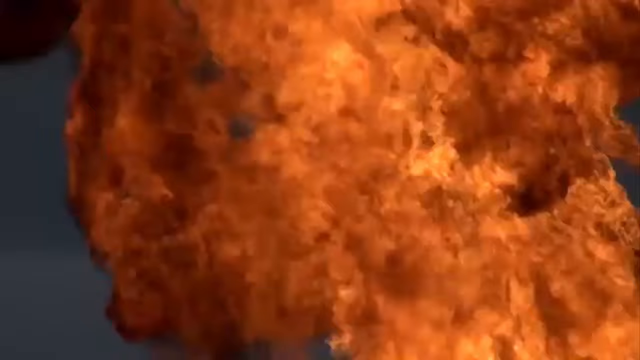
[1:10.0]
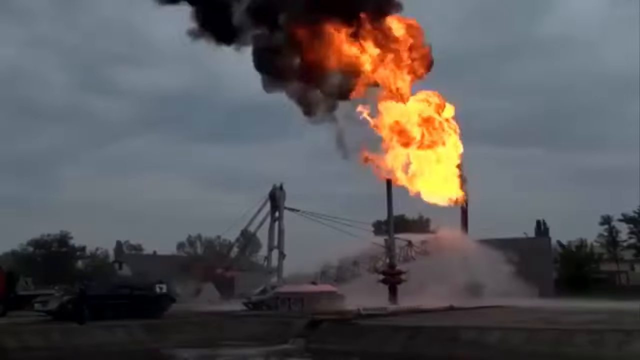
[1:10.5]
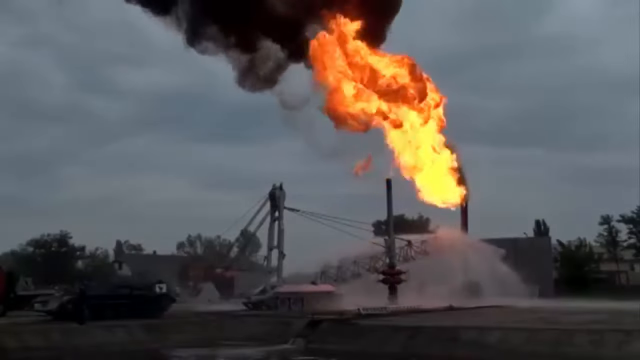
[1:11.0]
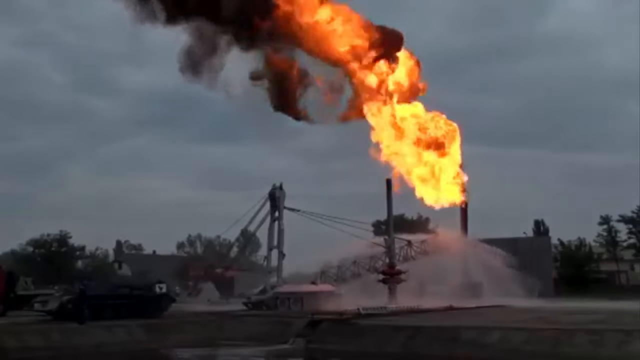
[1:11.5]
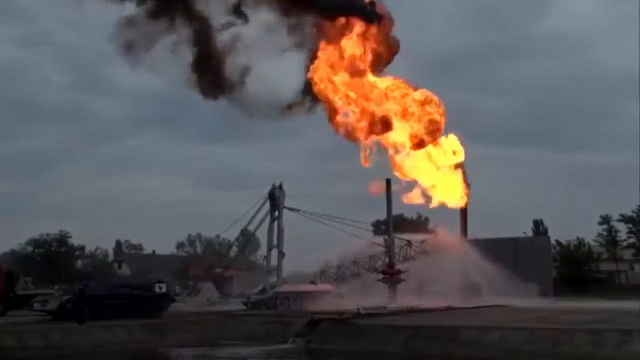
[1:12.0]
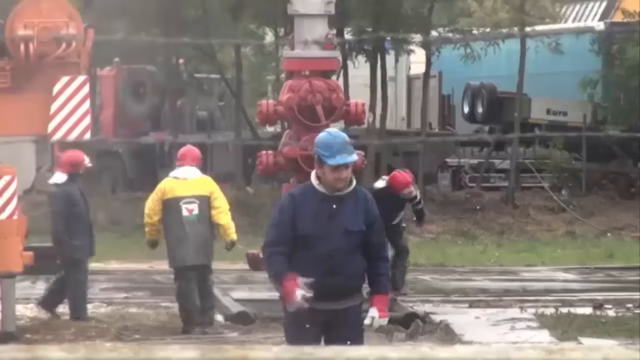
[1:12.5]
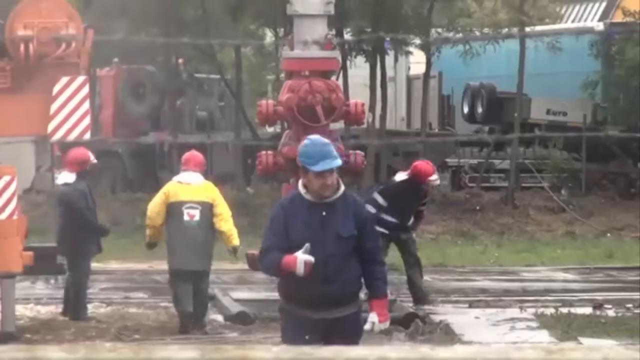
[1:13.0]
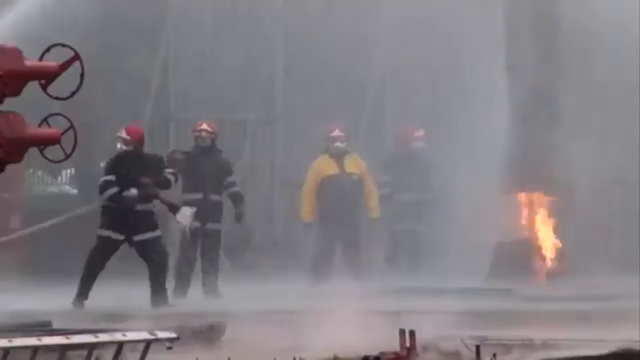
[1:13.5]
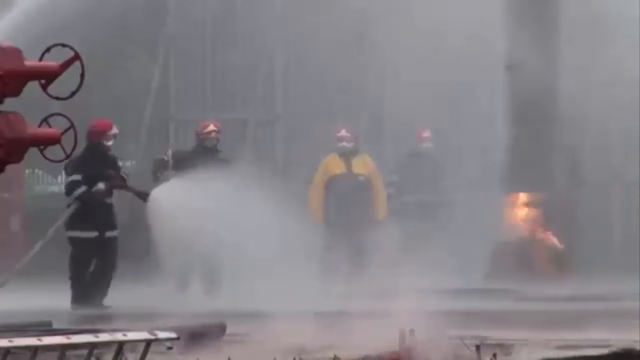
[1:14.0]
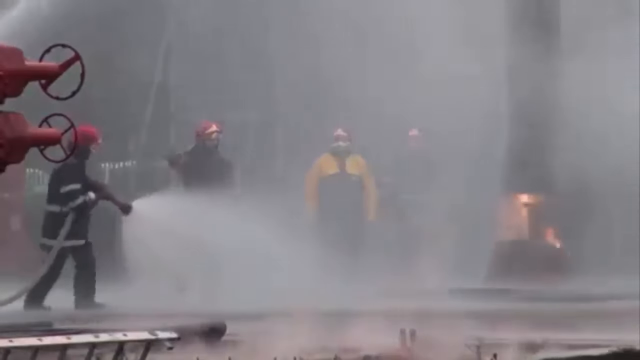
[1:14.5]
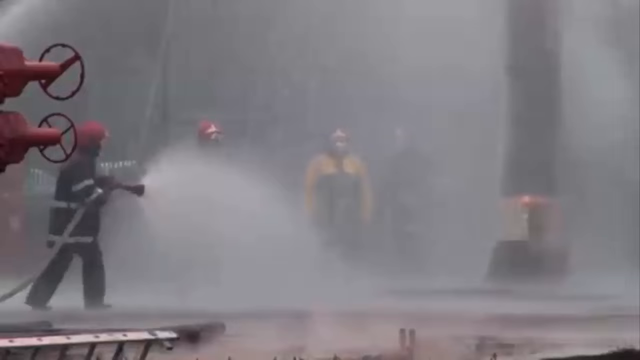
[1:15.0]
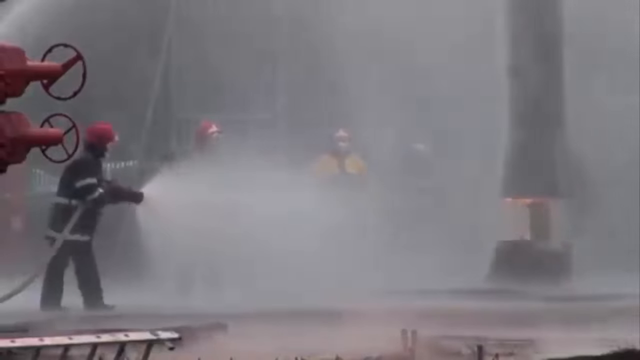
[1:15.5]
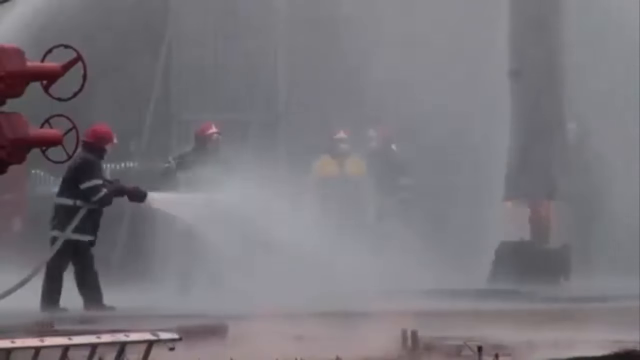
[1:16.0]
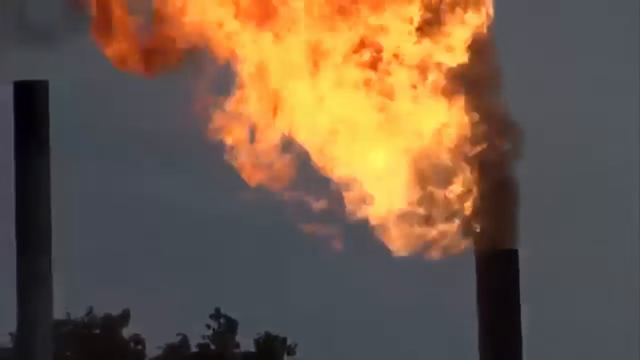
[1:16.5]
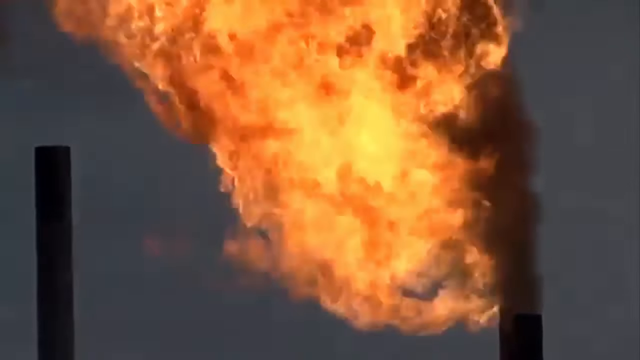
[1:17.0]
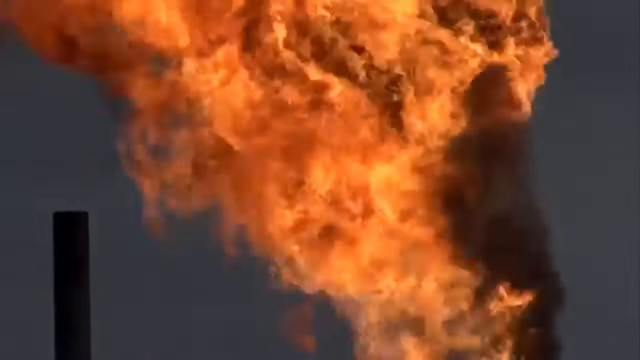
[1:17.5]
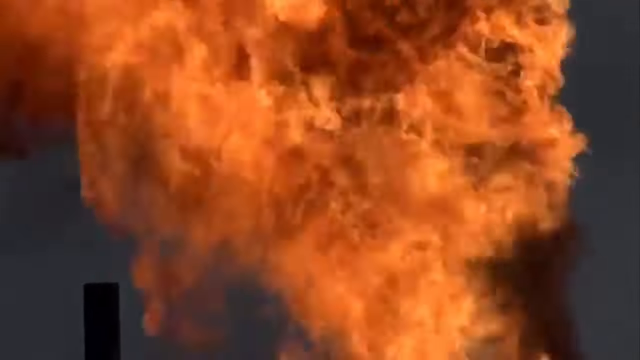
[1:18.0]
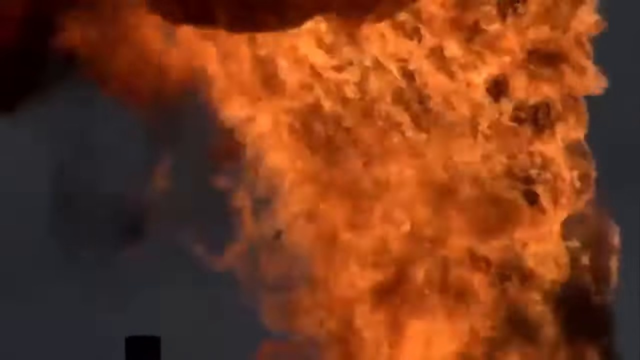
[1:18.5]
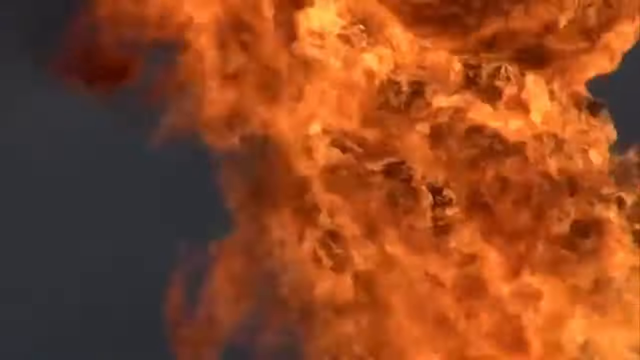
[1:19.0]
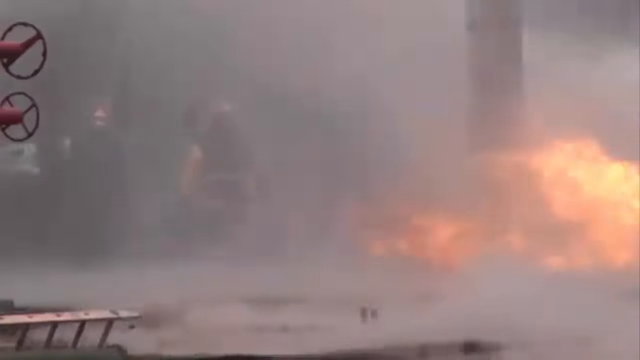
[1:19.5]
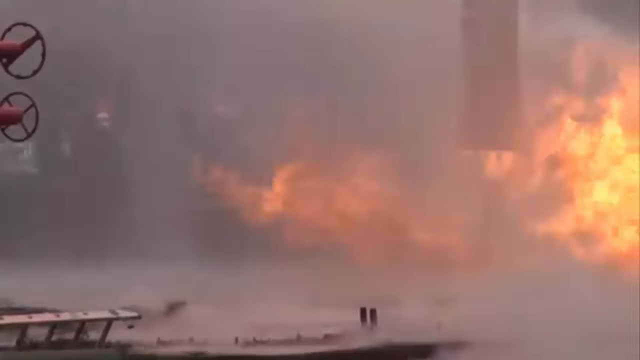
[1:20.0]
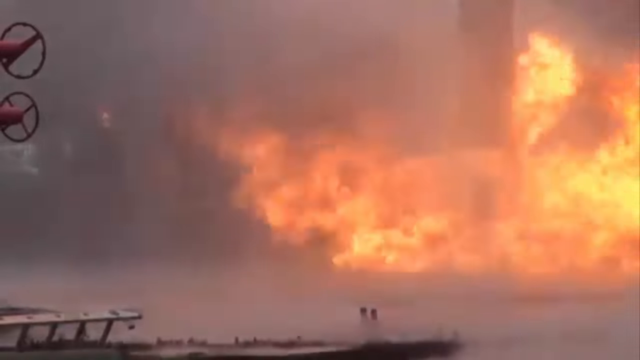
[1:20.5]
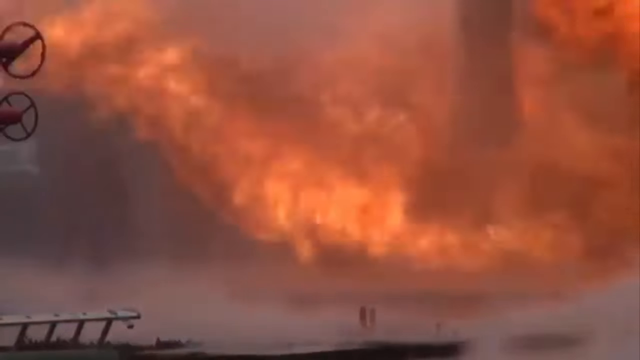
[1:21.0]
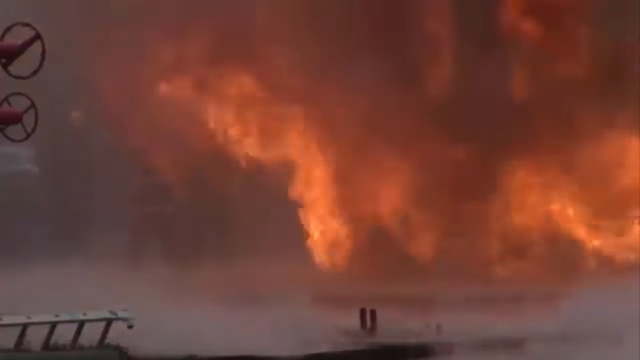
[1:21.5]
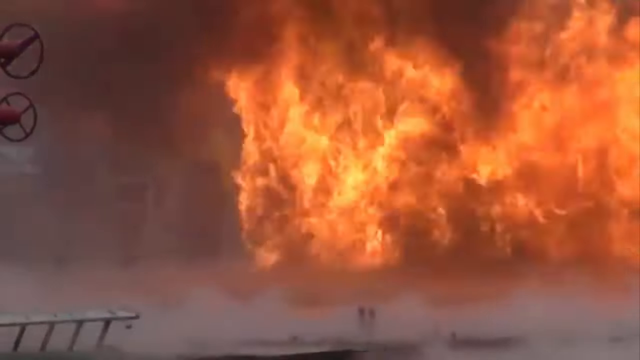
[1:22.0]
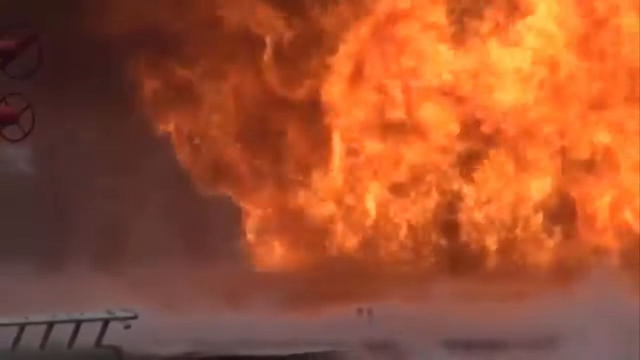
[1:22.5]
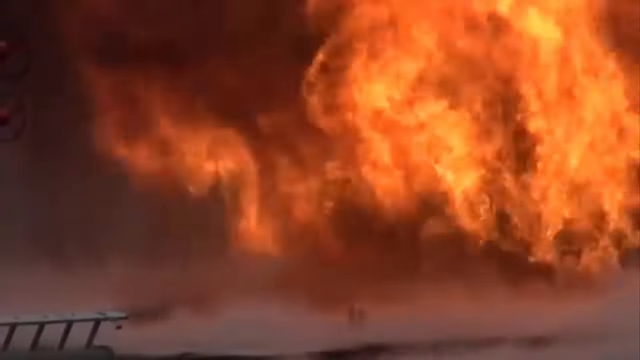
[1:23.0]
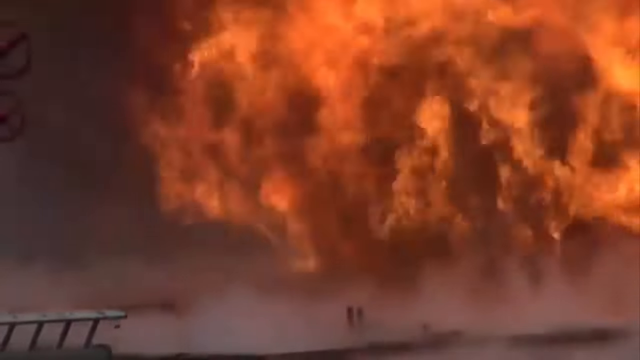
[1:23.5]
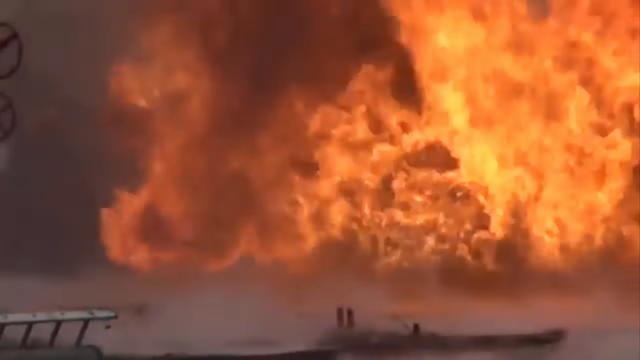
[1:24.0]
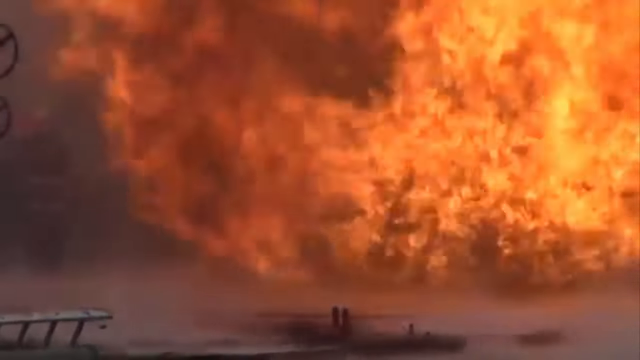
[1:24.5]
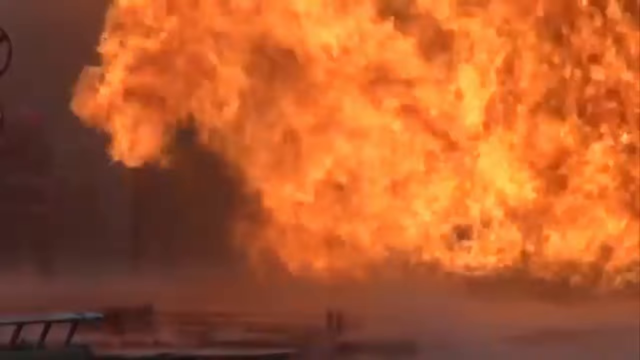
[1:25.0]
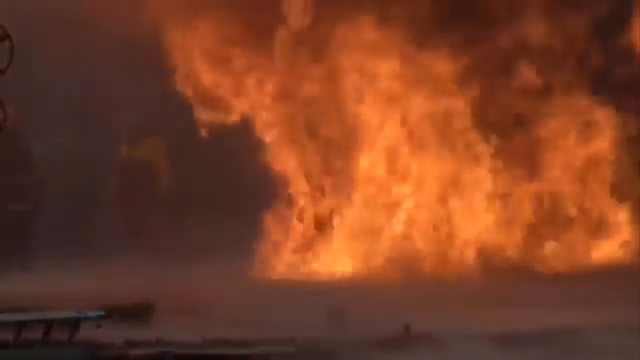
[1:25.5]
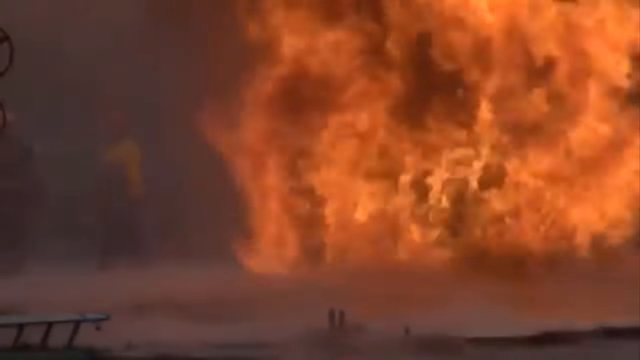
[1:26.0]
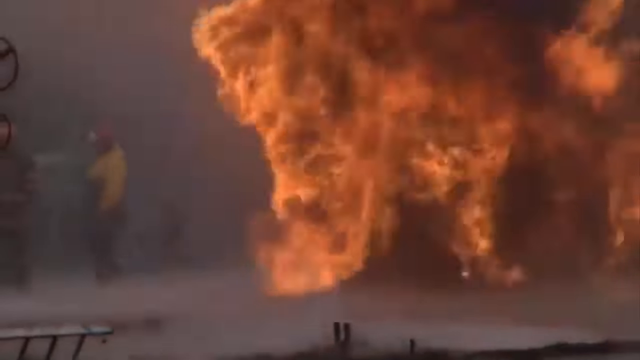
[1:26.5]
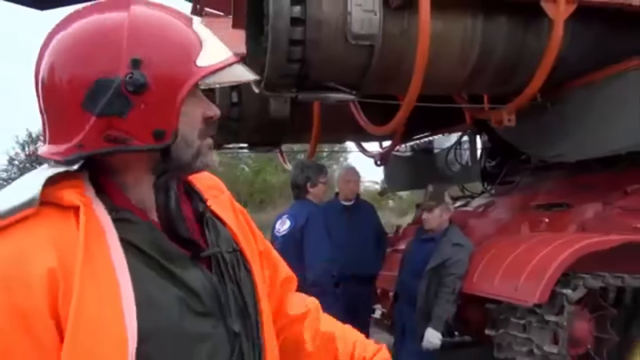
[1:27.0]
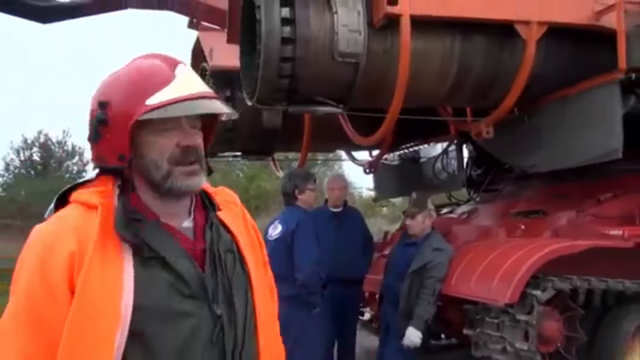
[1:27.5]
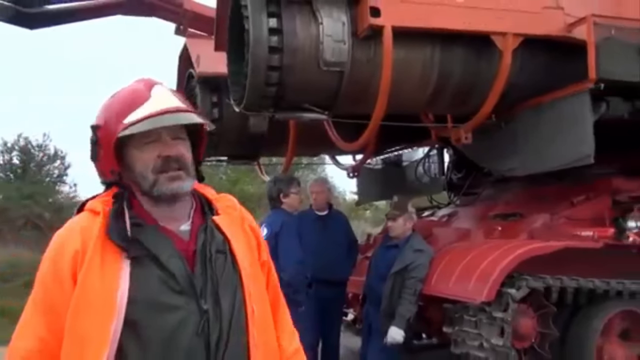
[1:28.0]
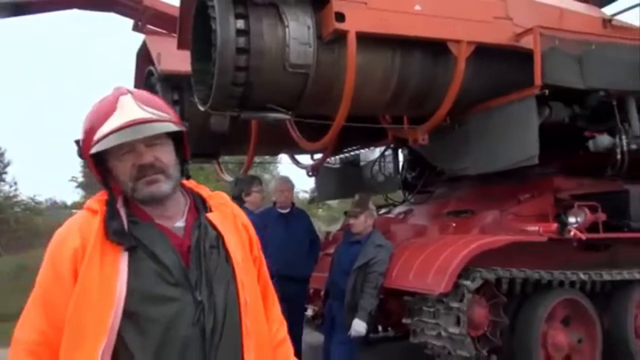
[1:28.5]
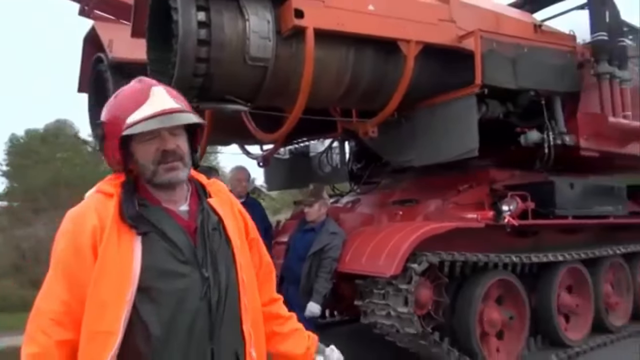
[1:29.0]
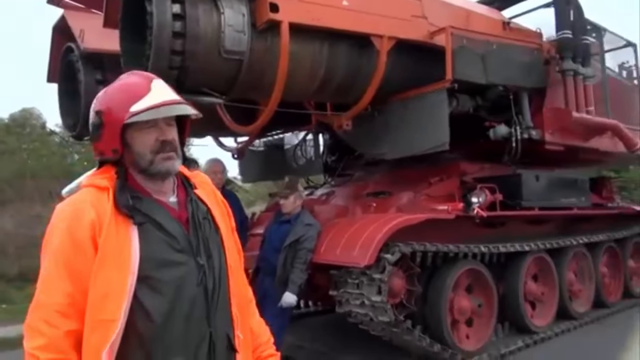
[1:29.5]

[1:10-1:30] Firefighters are working in a field. There seems to be a massive gas fire, and they seem to be using a lot of technological equipment.